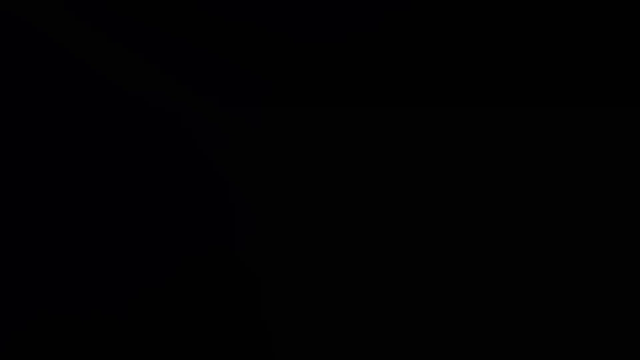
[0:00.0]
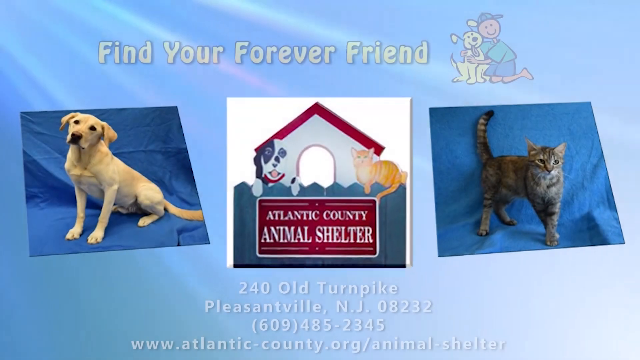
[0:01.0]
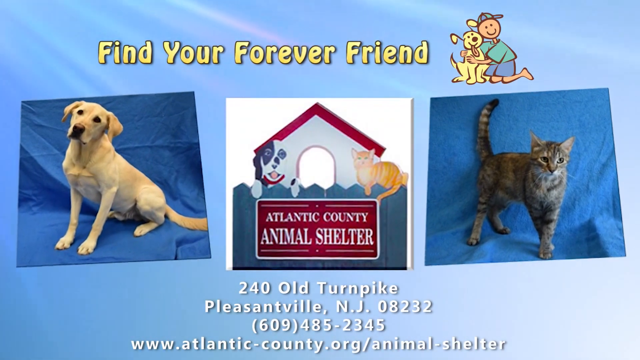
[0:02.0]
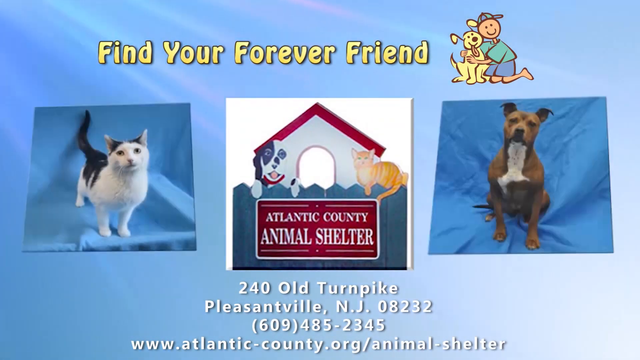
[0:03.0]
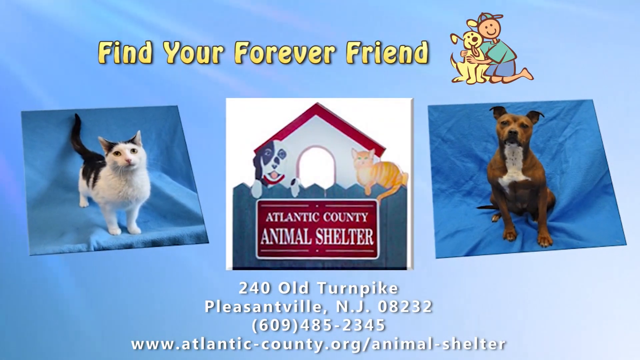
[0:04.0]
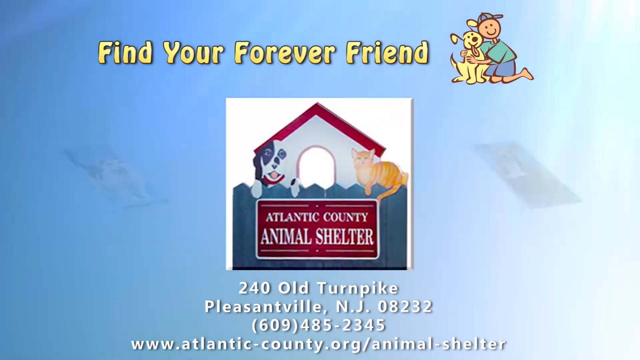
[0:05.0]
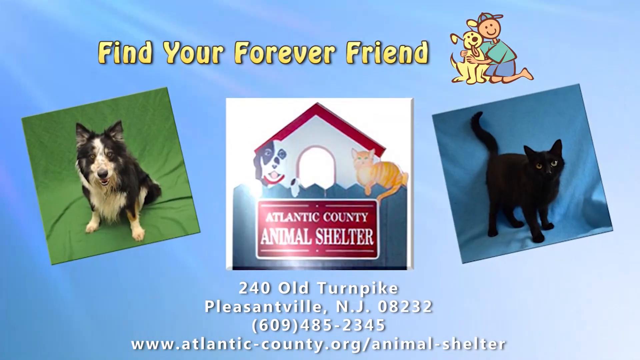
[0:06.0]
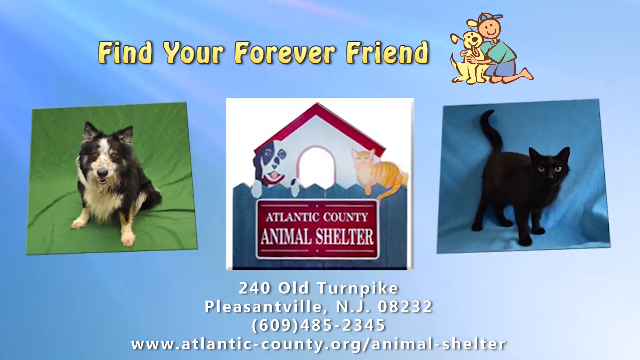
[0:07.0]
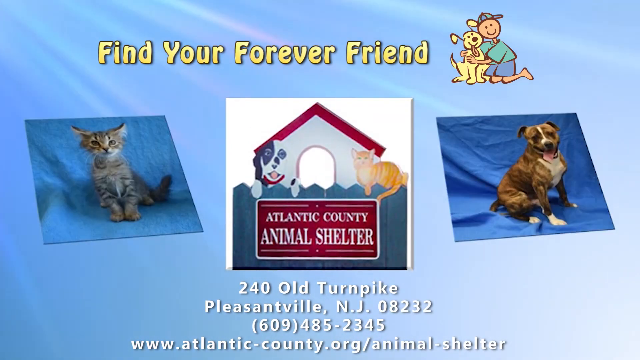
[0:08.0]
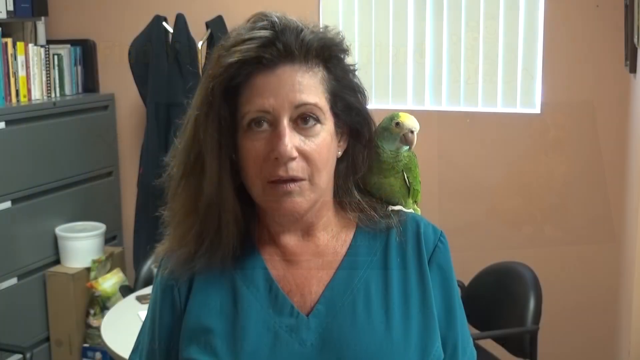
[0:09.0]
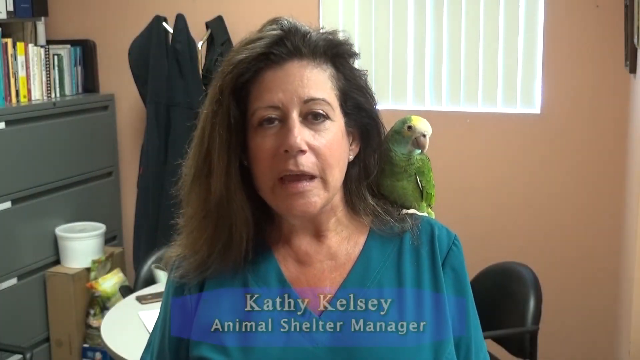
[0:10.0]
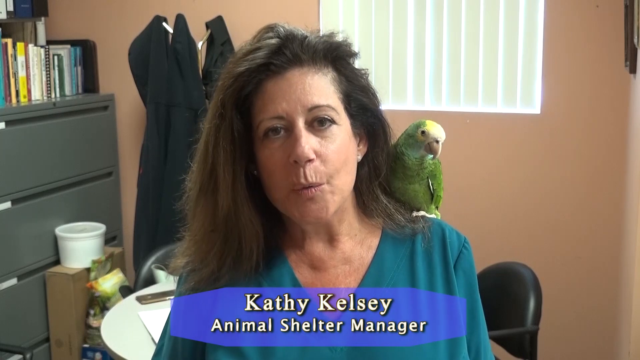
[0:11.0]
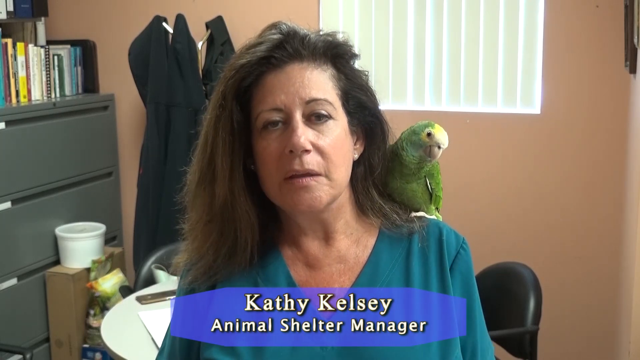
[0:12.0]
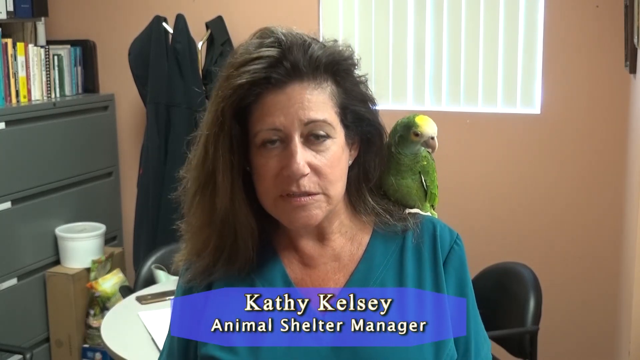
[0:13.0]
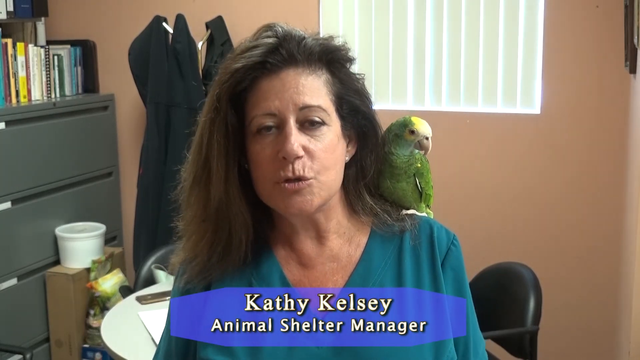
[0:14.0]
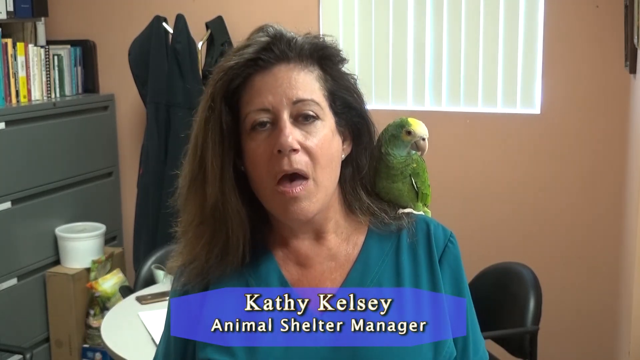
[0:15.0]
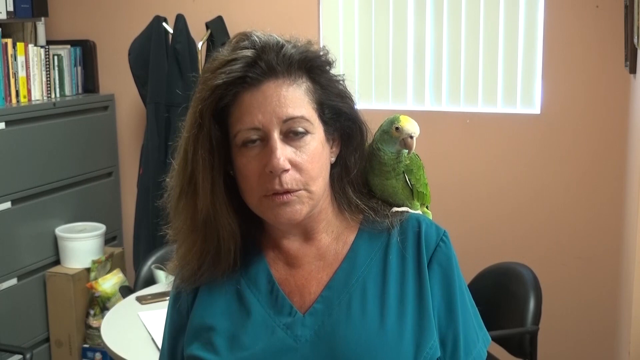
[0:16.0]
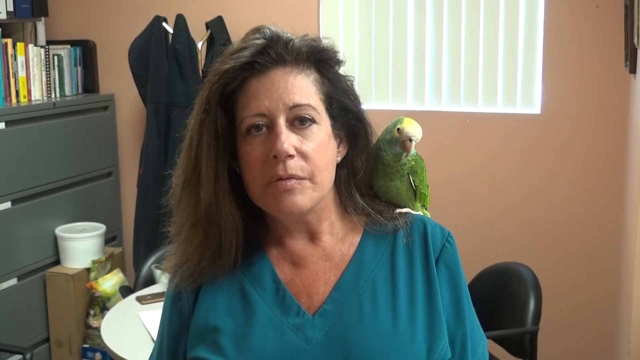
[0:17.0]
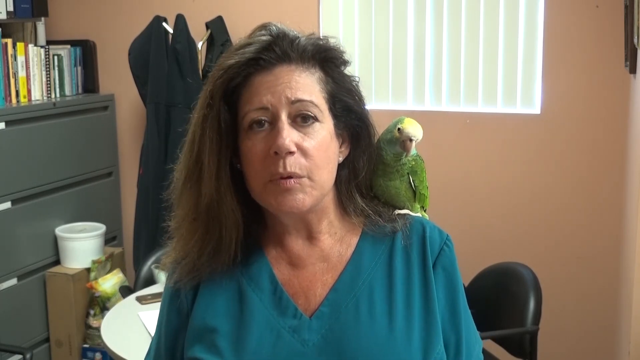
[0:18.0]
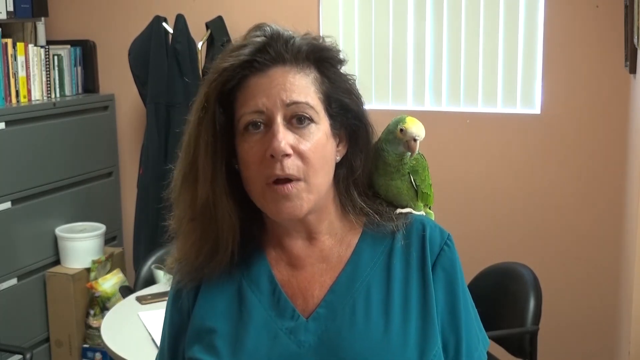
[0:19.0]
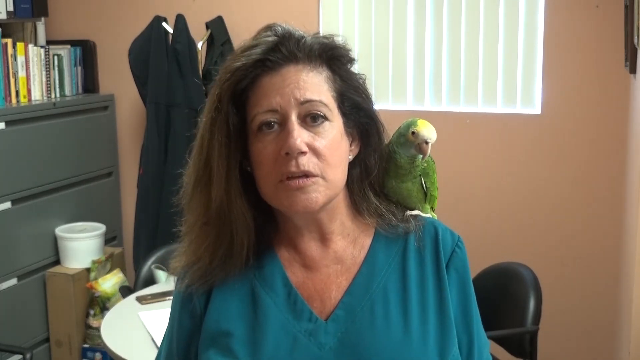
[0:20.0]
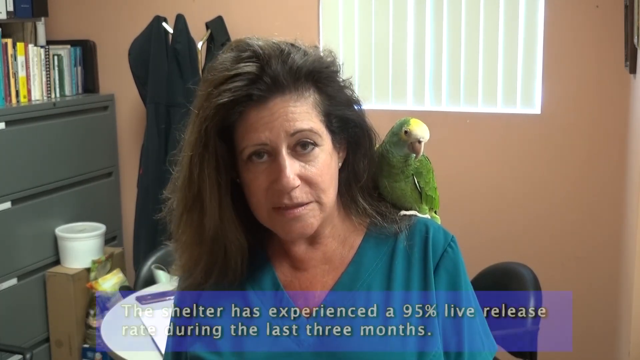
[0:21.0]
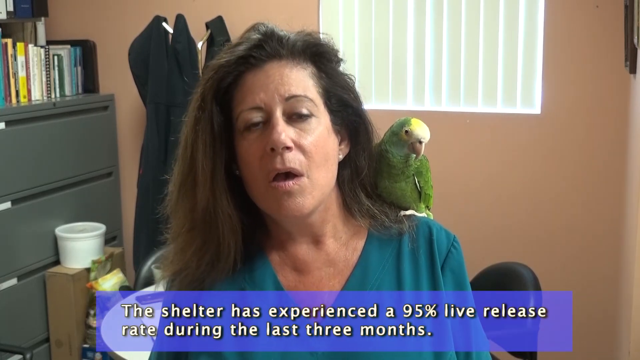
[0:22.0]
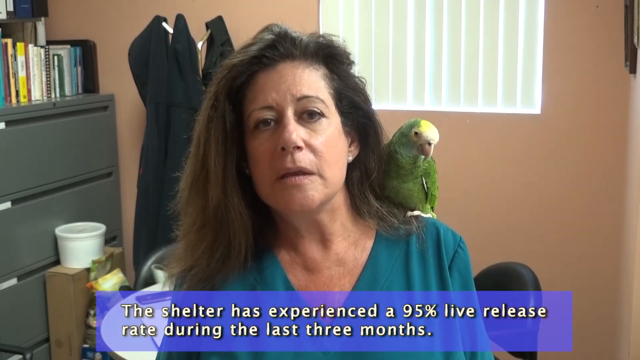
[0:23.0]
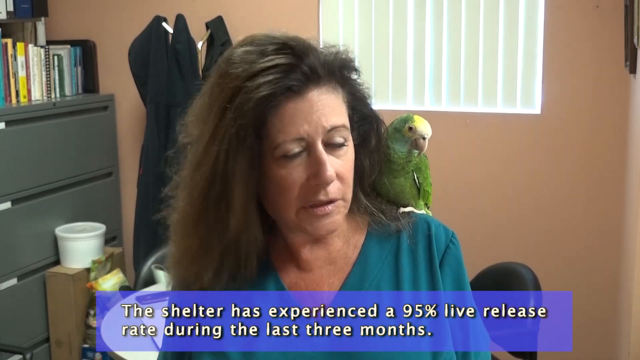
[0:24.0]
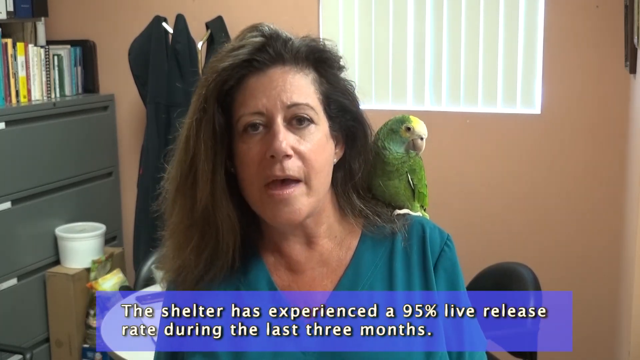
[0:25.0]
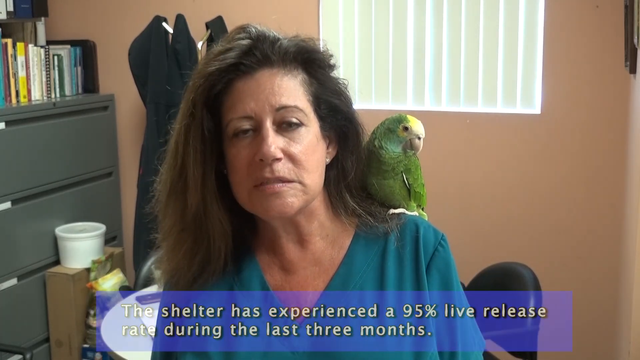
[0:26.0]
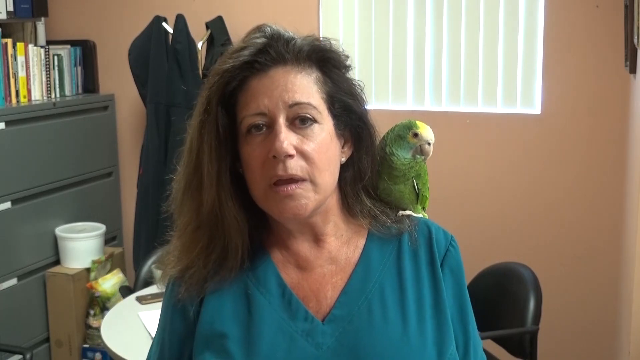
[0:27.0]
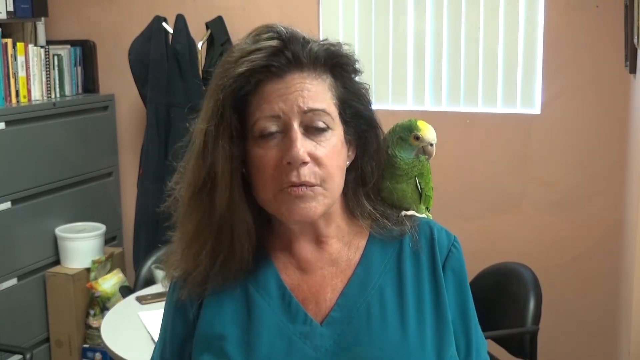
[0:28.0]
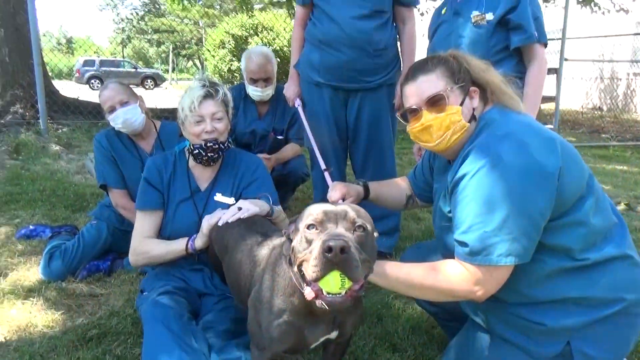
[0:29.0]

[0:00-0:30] The video opens with an introduction to Find Your Forever Friend. Its logo is a cartoon of a little boy wearing a blue hat sideways, a green shirt and blue shorts, hugging a yellow dog that is smiling and sticking its tongue out. Three images appear under the Find Your Forever Friend logo: on the left a yellow Labrador, in the middle the Atlantic County Animal Shelter logo, which is a doghouse with a dog and a cat on top of it, and on the far right a picture of a gray cat. The address 240 Old Turnpike, Pleasantville, NJ 08232, the phone number 609-485-2345 and the website www.atlantic-county.org\animal-shelter are given. The video transitions to two more pictures: on the far left a black and white cat, mostly white with a black back and tail, and a dog to the left that looks like a brown bulldog, white under the chin. Another transition shows two more animals, another dog on the left and a black cat on the right, and a quick transition shows a kitten on the left and a brown and white bulldog on the right. The video then cuts to a middle-aged woman with long brown hair in teal medical scrubs with a green parrot on her shoulder. She is Kathy Kelsey, an animal shelter manager. The background is her office, with a window with white blinds behind her and a gray metal filing cabinet to the left. A caption in a blue rectangle at the bottom says "the shelter has experienced a 95% live release rate during the last three months." The video then transitions to seven animal medical staff, all wearing masks, with a brown or black dog that appears to be a pit bull holding a tennis ball in its mouth.